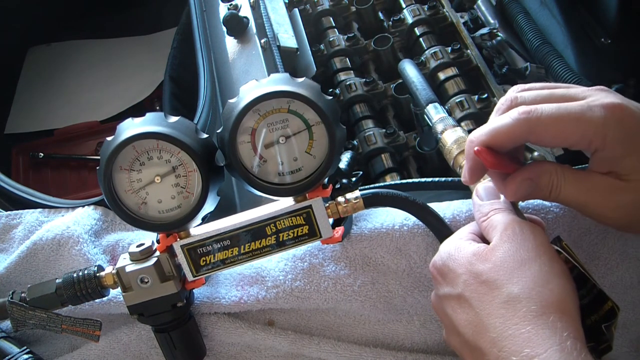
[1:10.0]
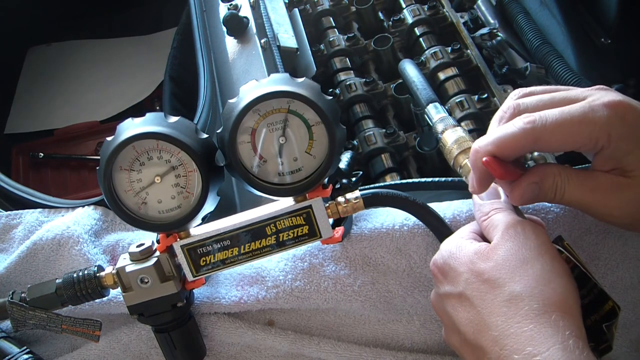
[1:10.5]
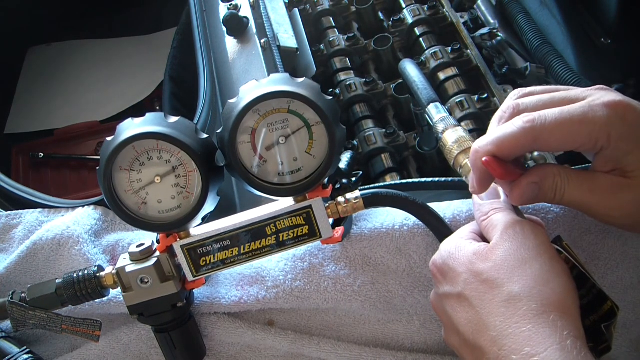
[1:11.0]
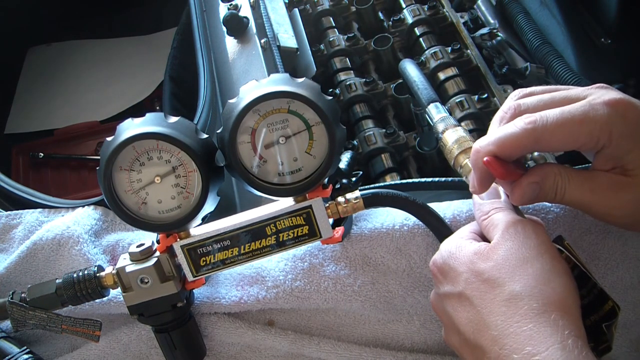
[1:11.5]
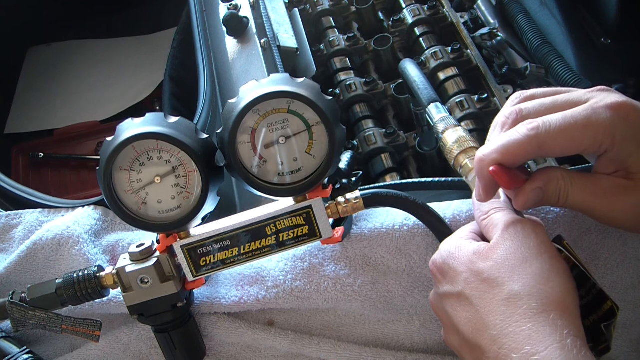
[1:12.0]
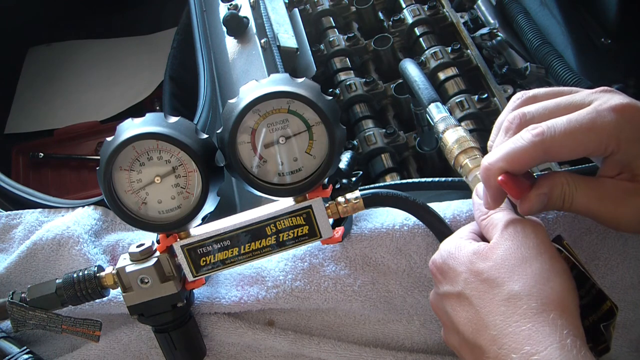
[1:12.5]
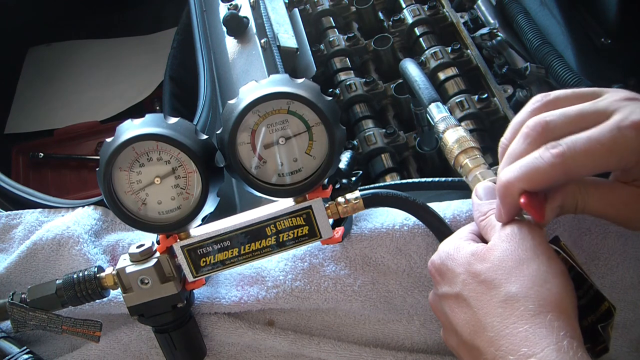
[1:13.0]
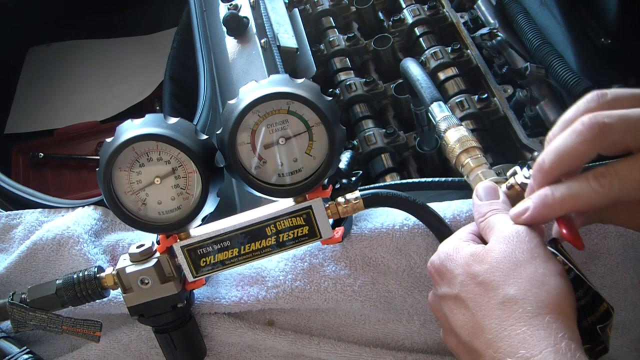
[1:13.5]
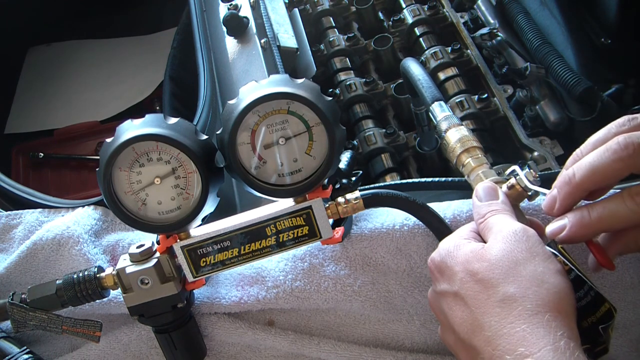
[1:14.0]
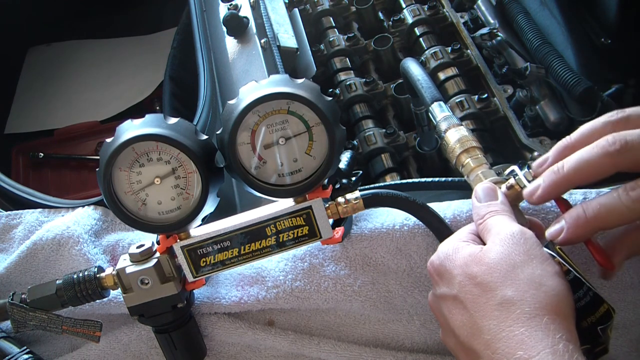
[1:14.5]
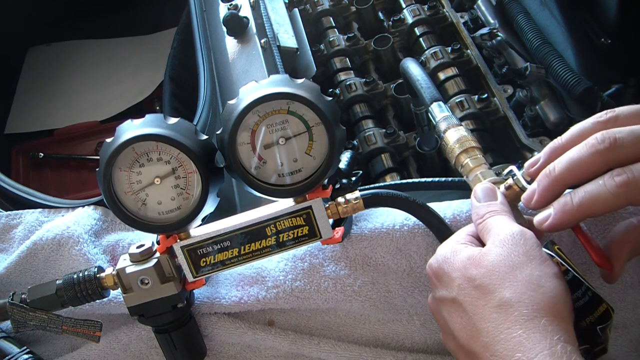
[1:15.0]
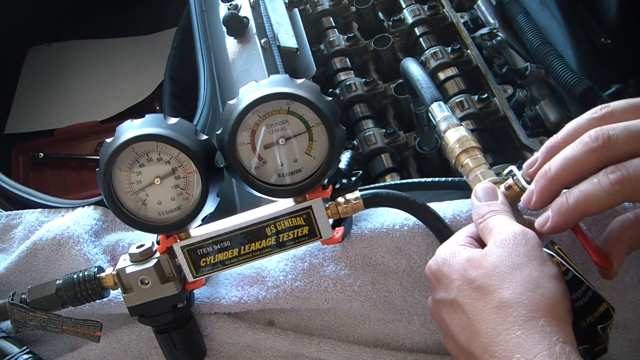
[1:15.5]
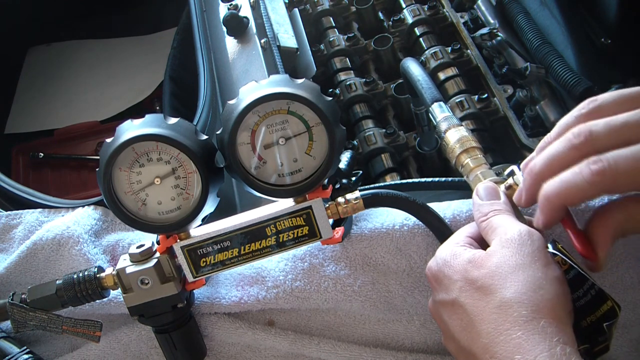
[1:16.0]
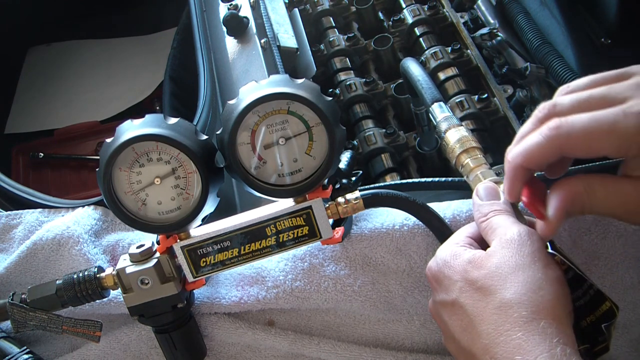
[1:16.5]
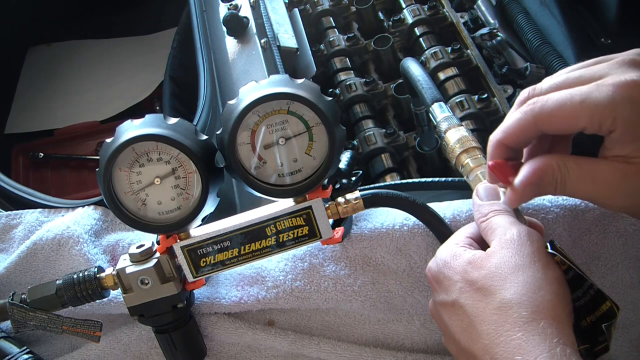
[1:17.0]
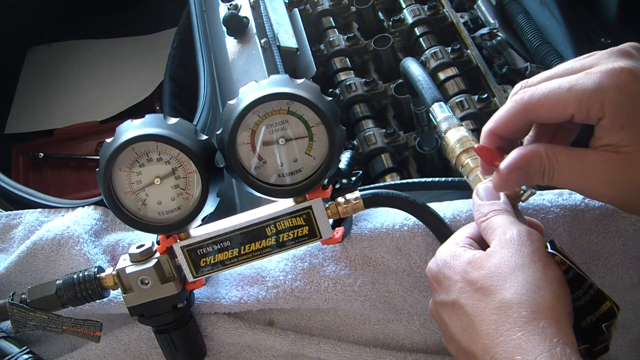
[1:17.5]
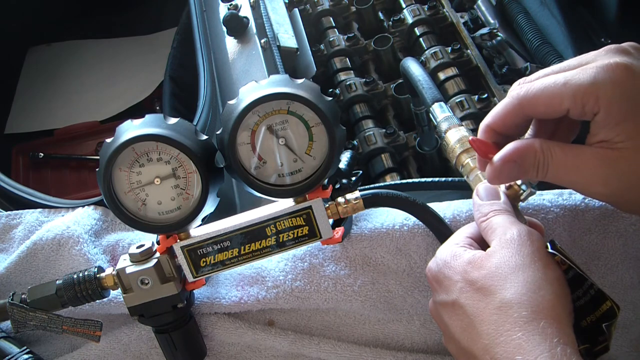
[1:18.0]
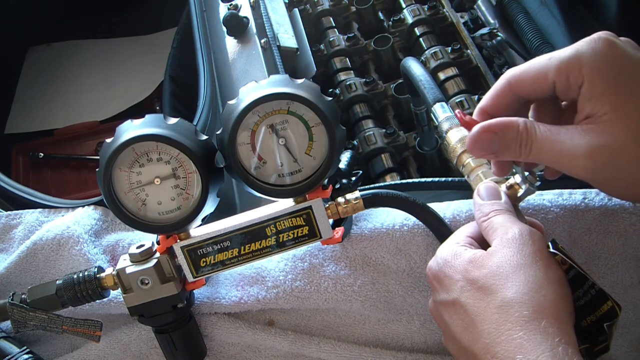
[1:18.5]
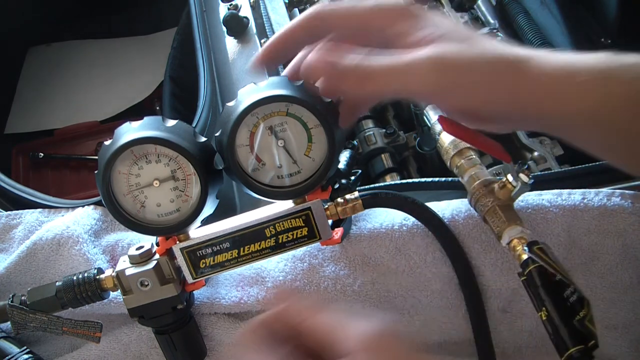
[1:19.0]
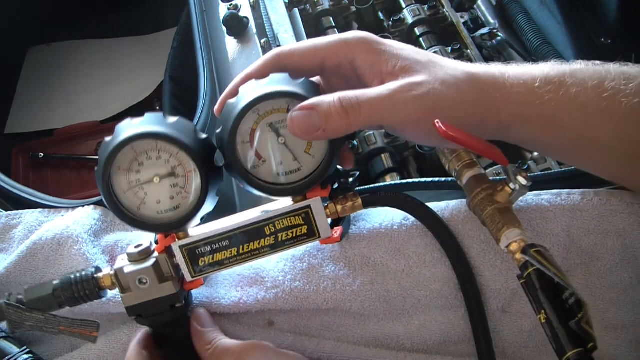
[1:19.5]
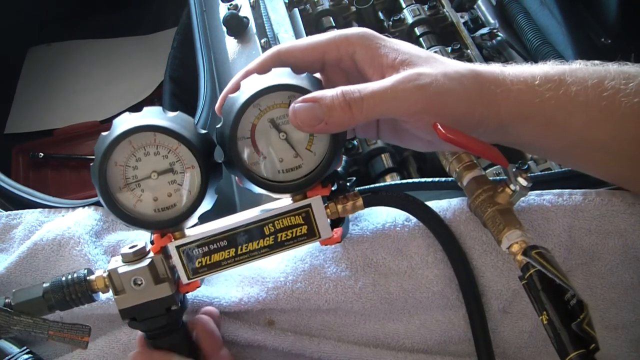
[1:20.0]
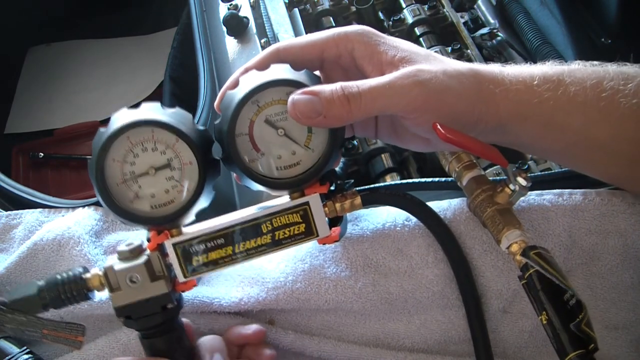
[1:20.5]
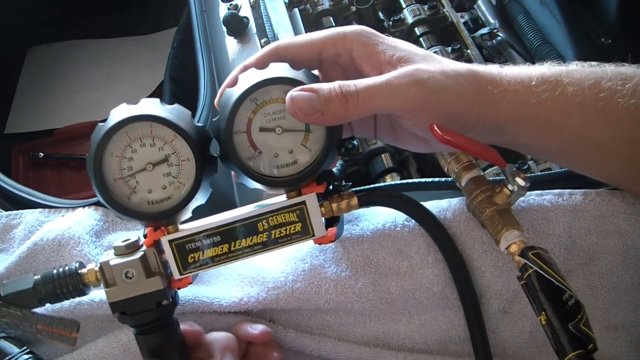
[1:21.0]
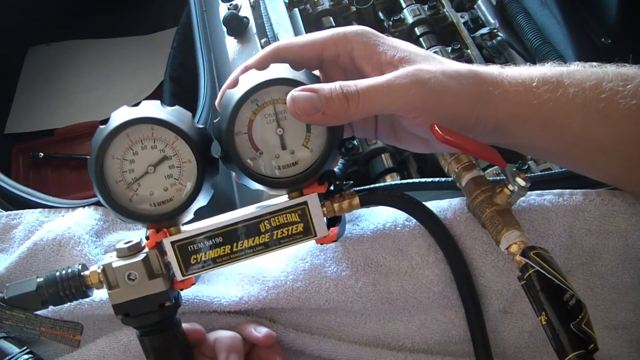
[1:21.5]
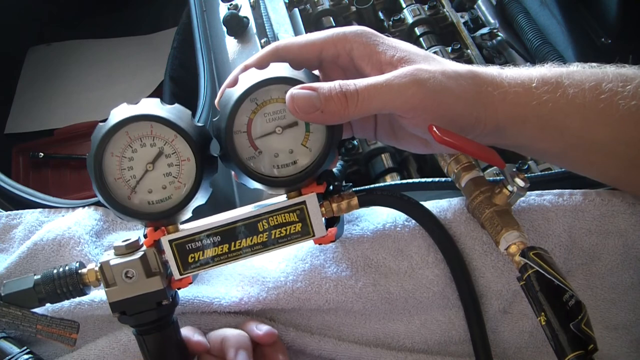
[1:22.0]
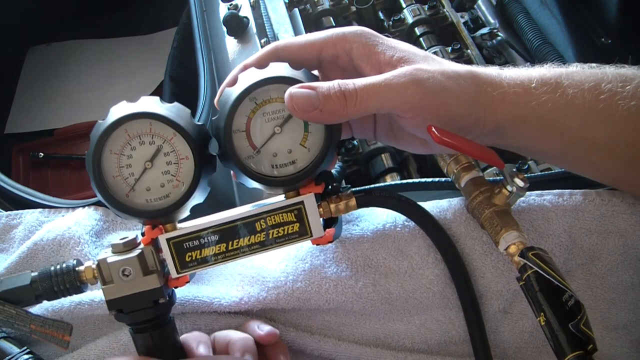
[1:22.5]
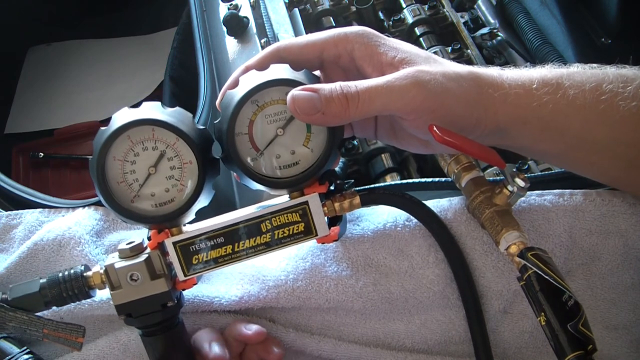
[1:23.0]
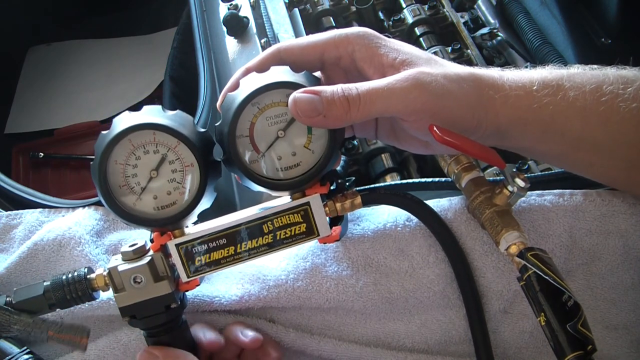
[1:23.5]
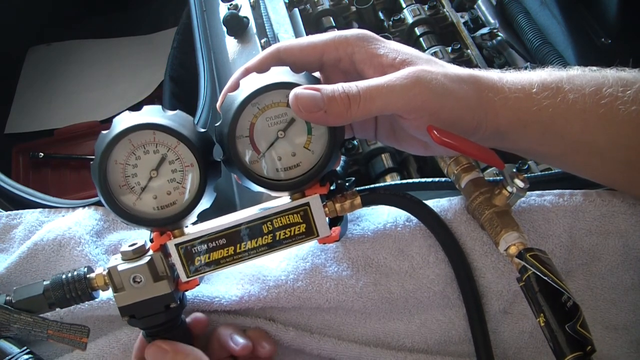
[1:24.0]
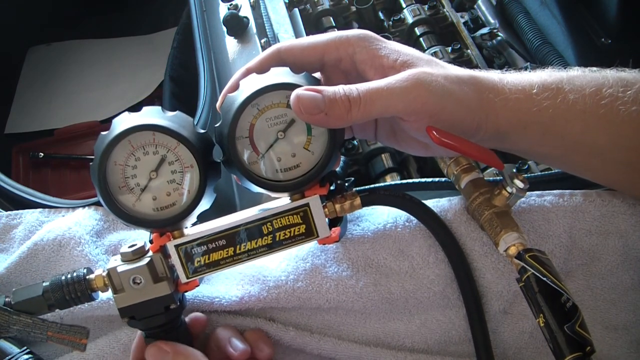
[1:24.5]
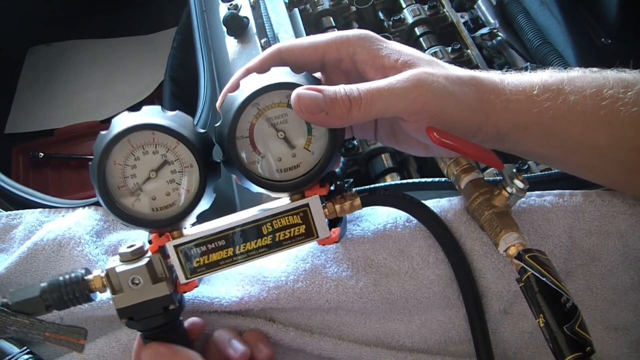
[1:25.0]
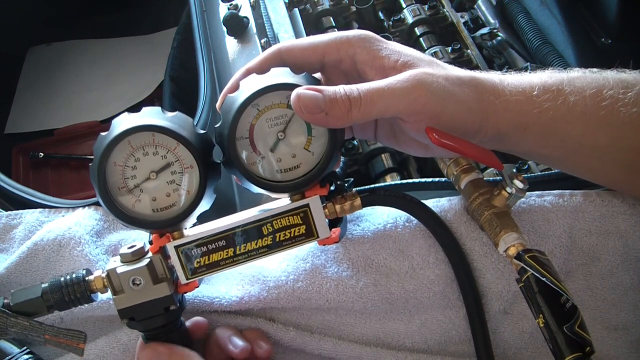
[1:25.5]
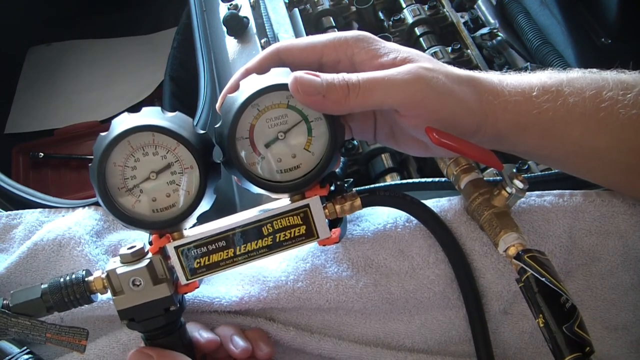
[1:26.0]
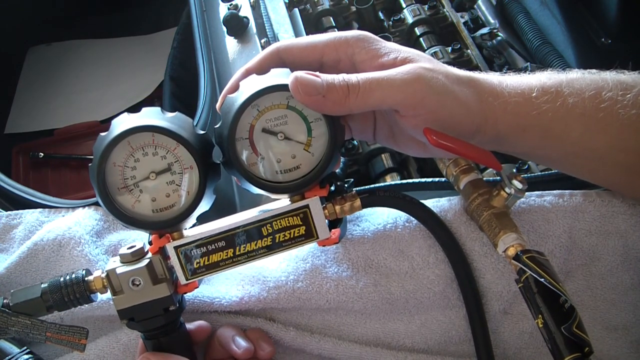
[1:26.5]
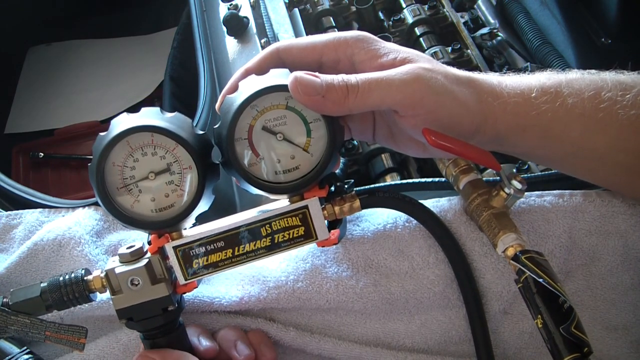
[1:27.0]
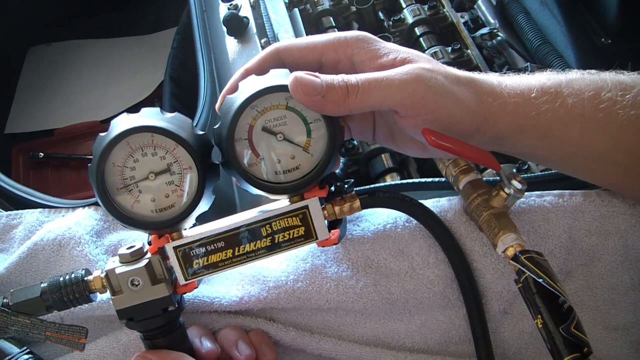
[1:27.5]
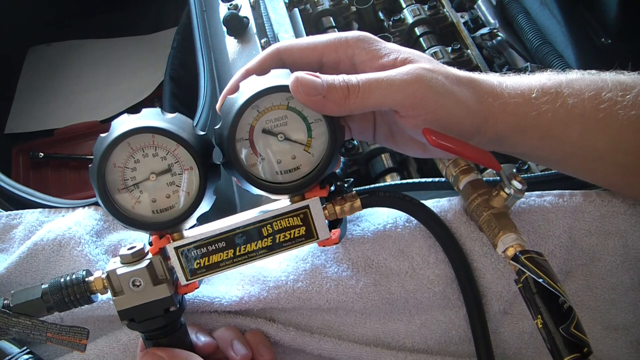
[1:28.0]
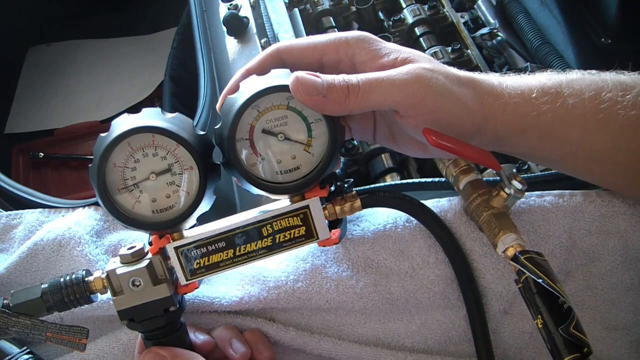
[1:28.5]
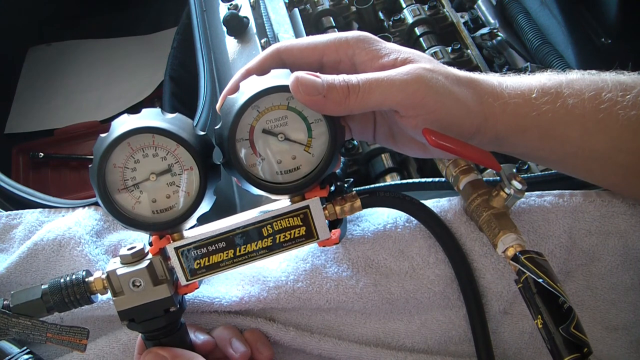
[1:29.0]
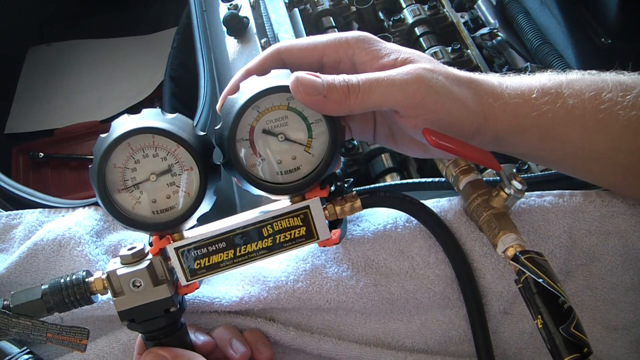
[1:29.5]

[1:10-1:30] An up-close shot shows a leakage tester with two gauges on a small square gray box, which has "U.S. General Cylinder Leakage Tester" written in yellow on the front. A hose comes off the left side of the box and another off the right side. The gauges are black with white faces. To the right of the gauge, the hose enters the other hose coming out of the motor. A pair of hands holds the handle that flips up or down to test for a leak. The person slowly pulls down the red handle and the needle on the second gauge moves; when he moves the handle back up, the gauge goes all the way down to the bottom. The person's hand then picks up the gauge, showing the needle moving; the needle goes all the way to zero and then all the way back to full, apparently indicating a leak somewhere in the motor.